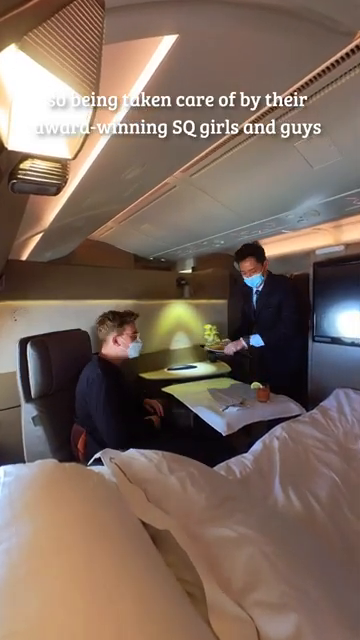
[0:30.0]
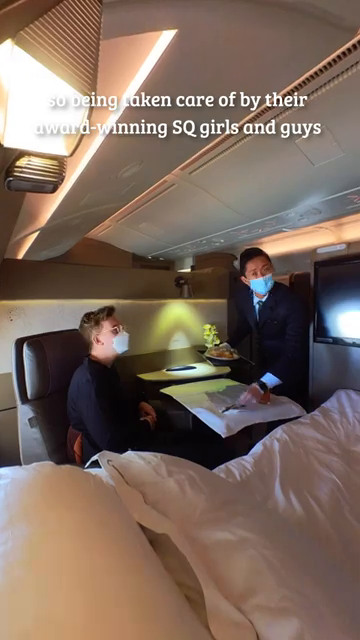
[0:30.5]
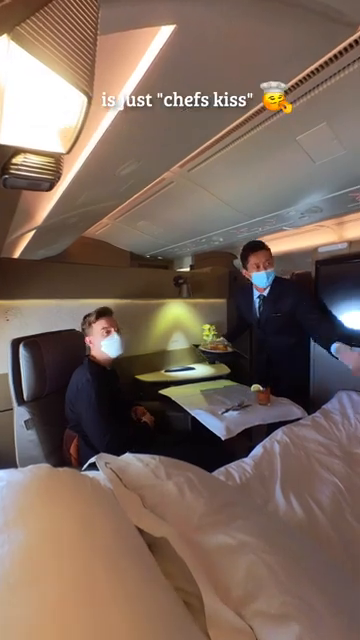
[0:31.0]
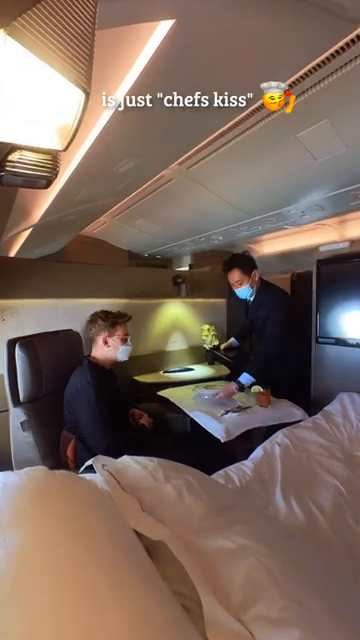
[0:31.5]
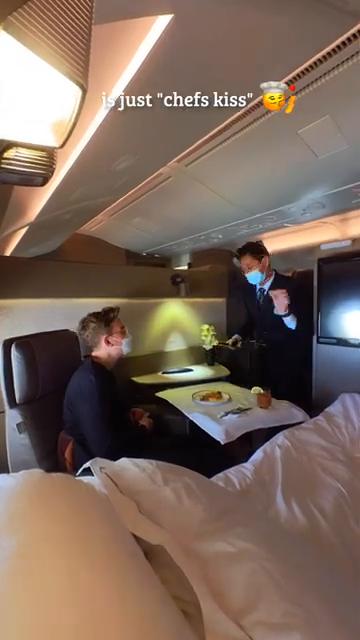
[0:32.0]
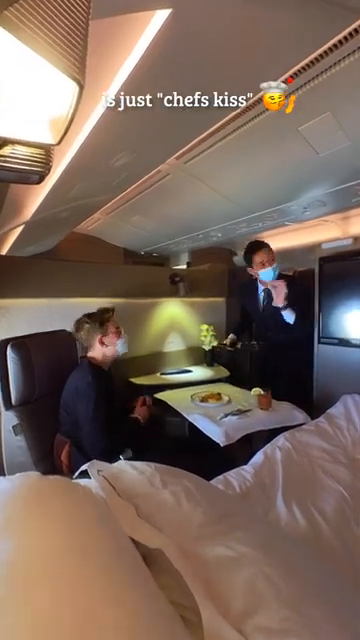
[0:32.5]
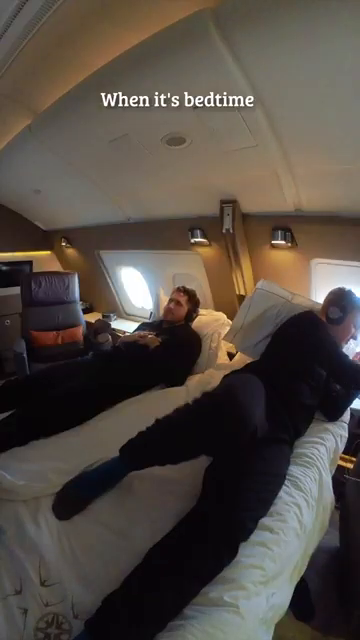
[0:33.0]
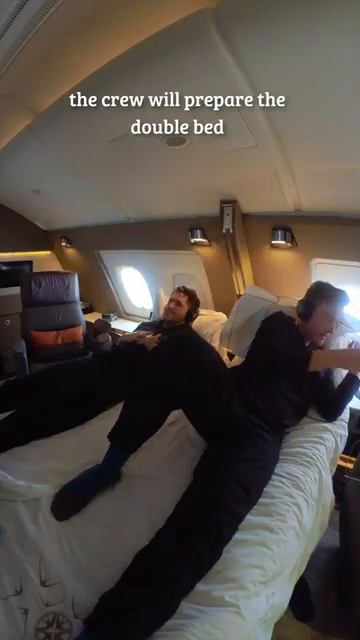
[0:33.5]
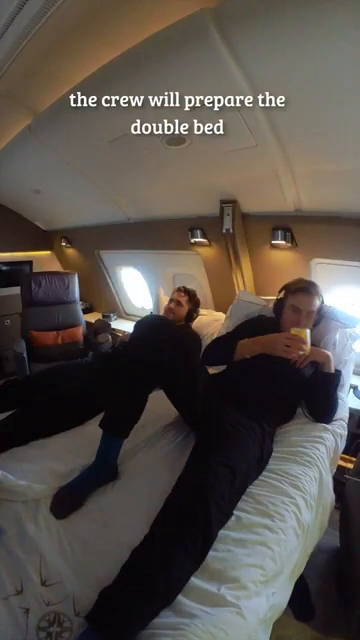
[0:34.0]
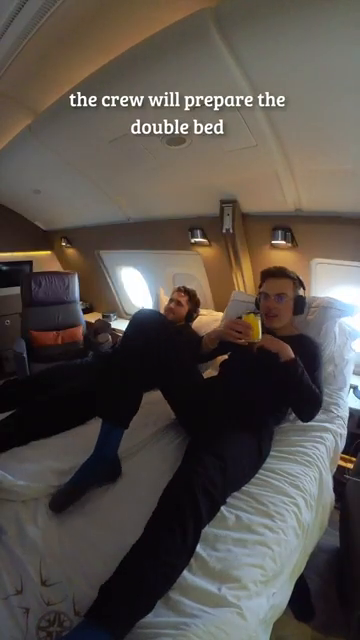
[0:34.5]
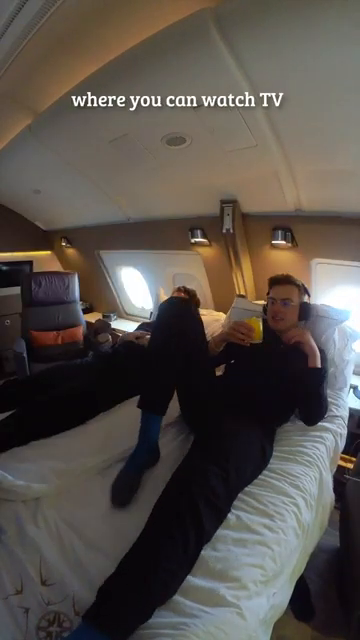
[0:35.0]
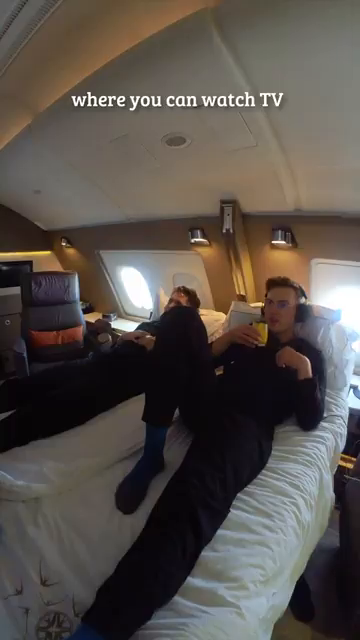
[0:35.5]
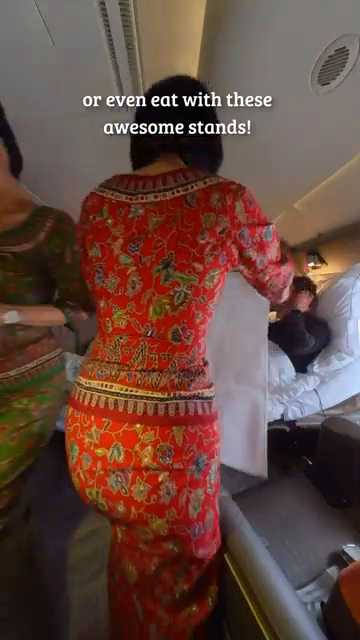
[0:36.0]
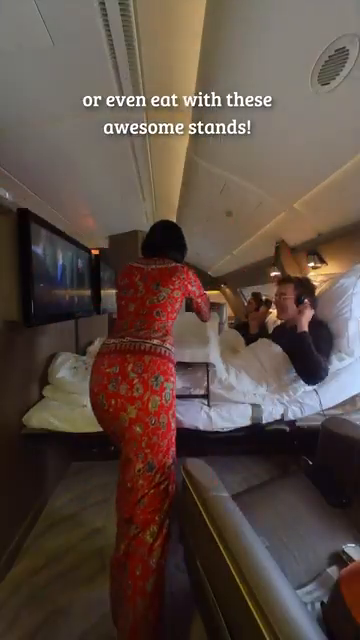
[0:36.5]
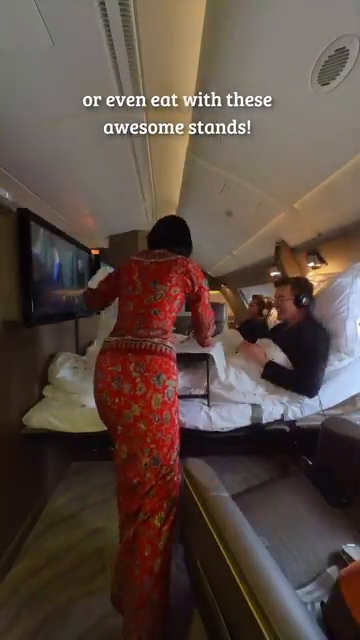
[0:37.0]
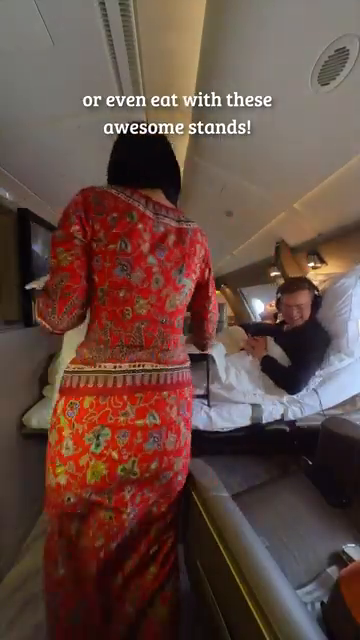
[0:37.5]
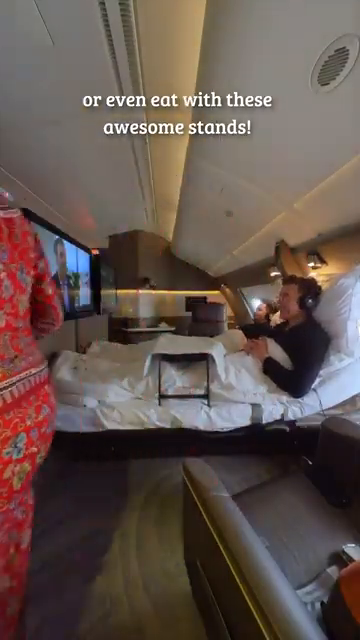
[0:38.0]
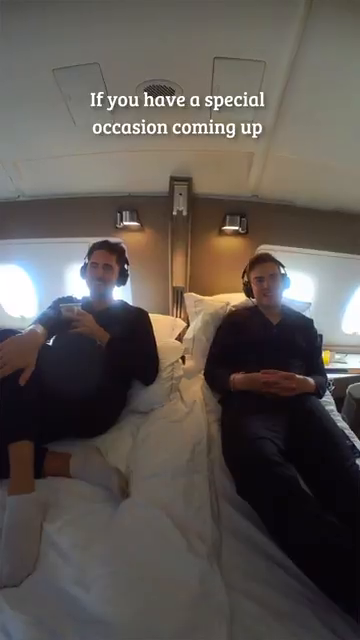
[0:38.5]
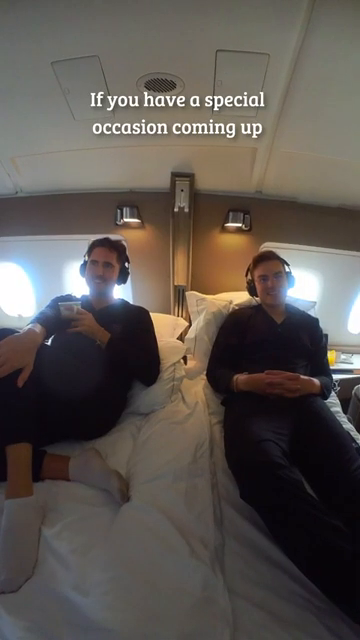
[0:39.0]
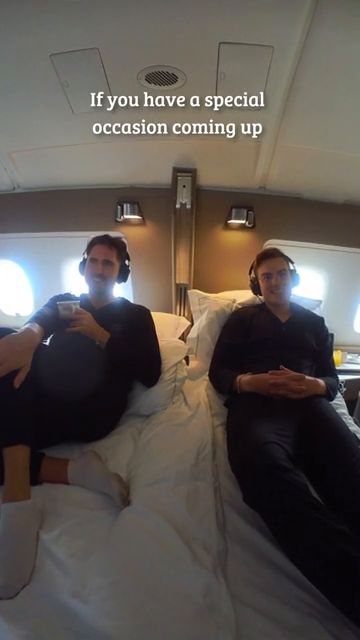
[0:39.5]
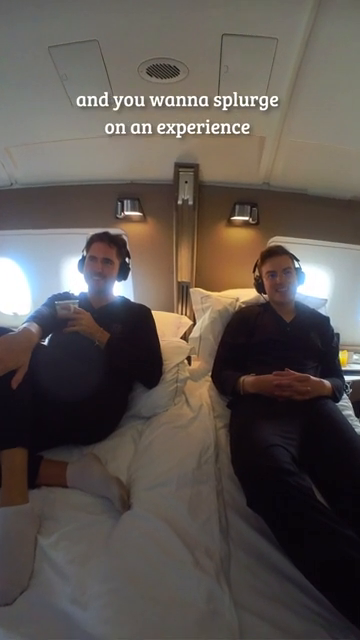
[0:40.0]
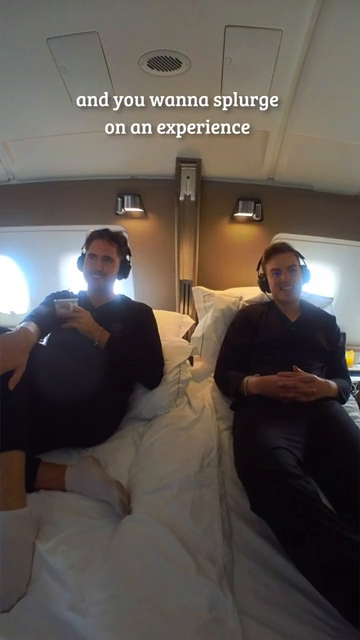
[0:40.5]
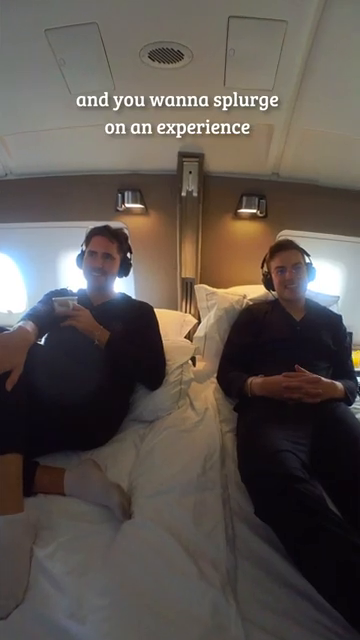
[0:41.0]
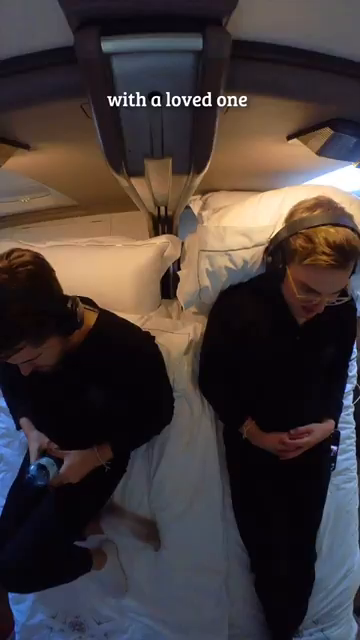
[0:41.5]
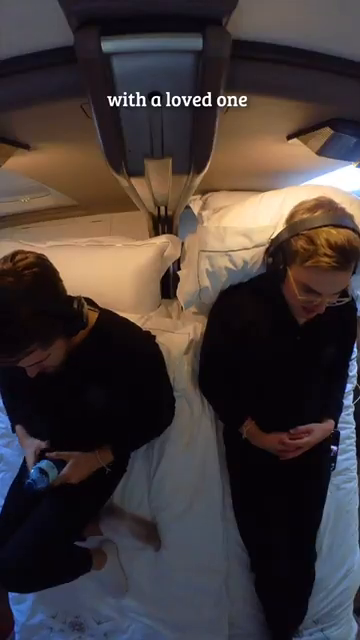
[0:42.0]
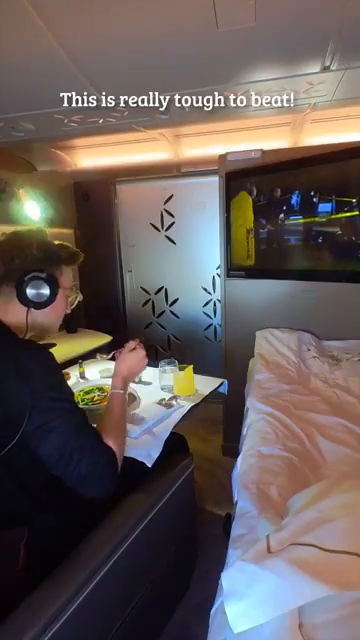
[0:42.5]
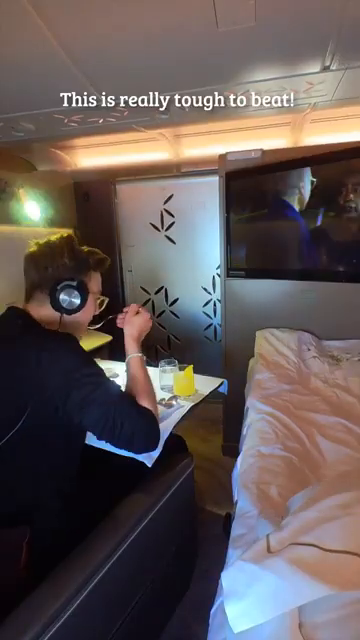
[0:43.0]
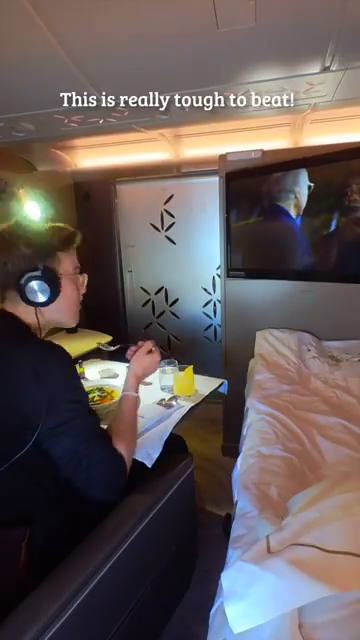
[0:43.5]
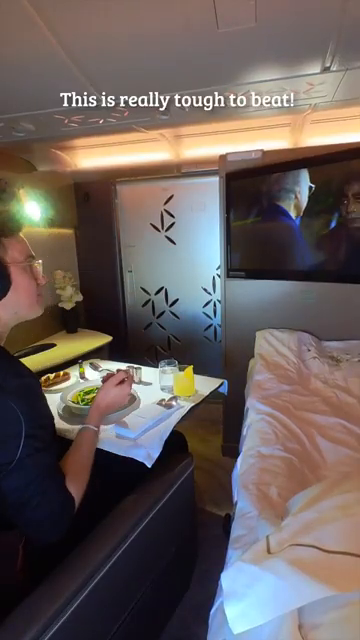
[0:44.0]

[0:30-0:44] A steward is in the cabin with the two gentlemen and appears to be serving them another meal. He stands in front of one gentleman, laying down silverware and some sort of entree for him. The scene then switches to both gentlemen lying in bed with headphones on. The gentleman on the left appears to be playing a video game, and the gentleman on the right is lying down watching TV. He sips something that looks like orange juice. A flight attendant then comes in, and it appears they are about to be served another meal in bed.